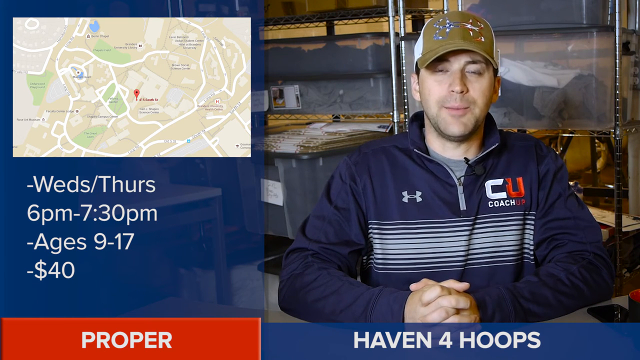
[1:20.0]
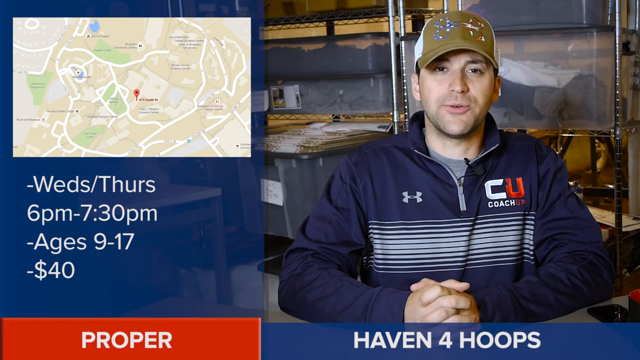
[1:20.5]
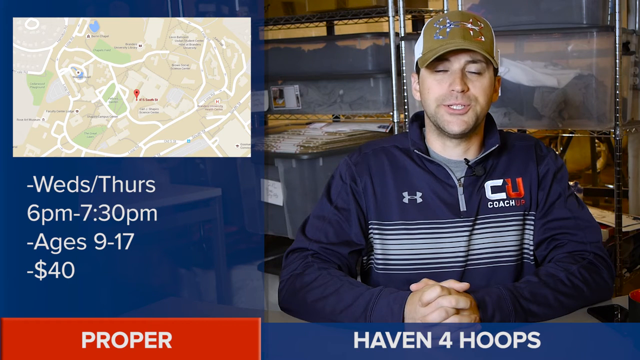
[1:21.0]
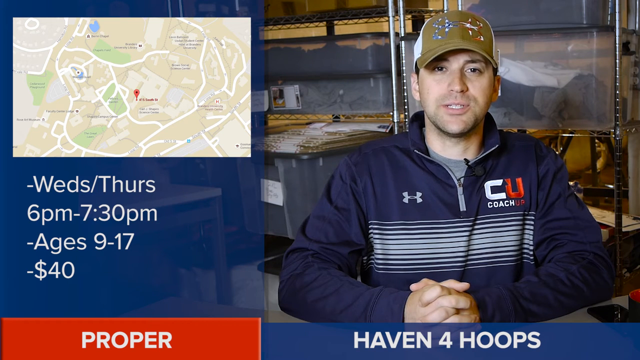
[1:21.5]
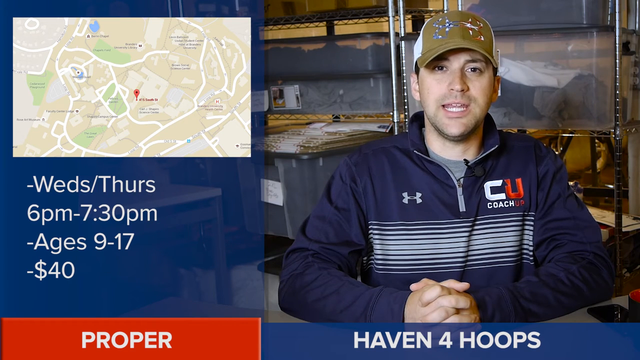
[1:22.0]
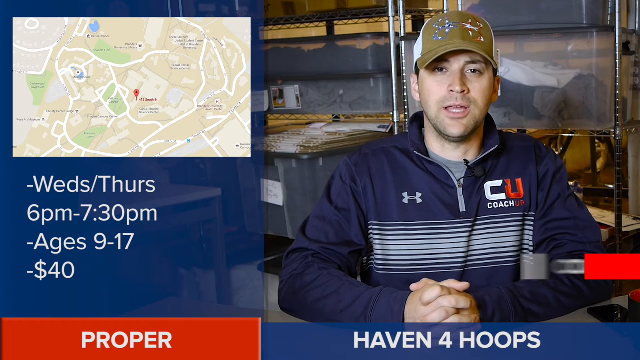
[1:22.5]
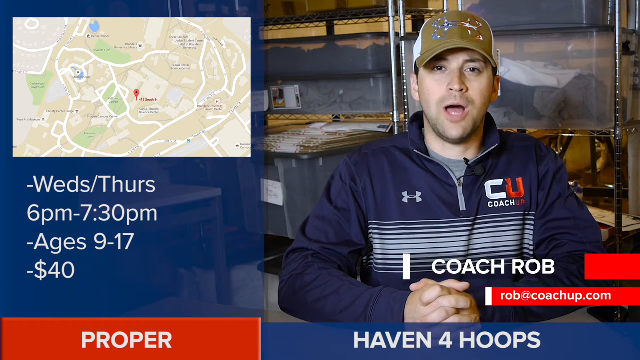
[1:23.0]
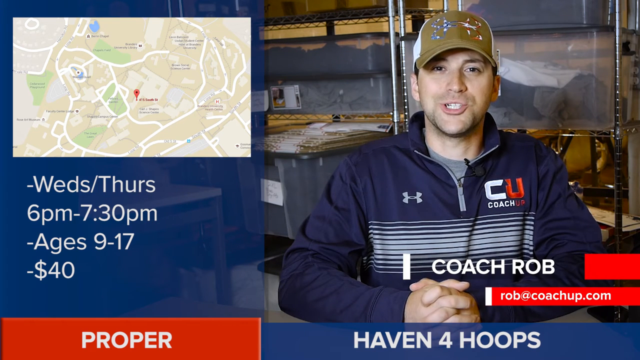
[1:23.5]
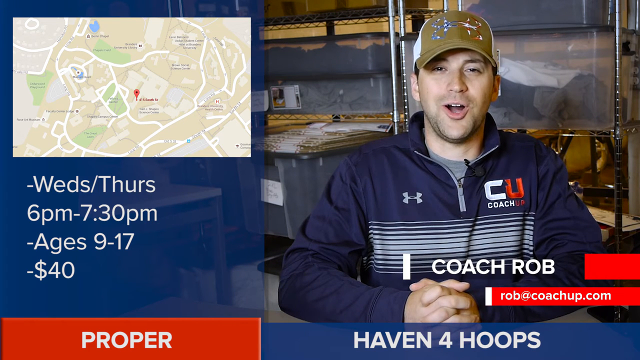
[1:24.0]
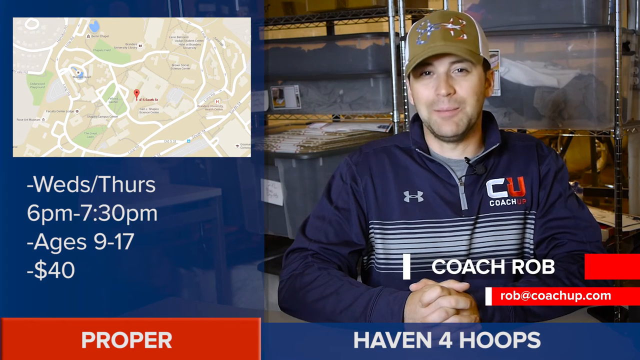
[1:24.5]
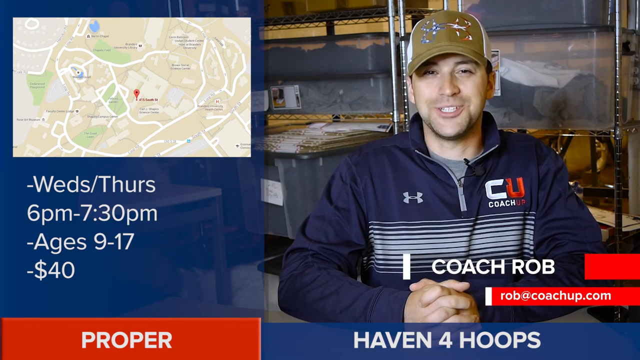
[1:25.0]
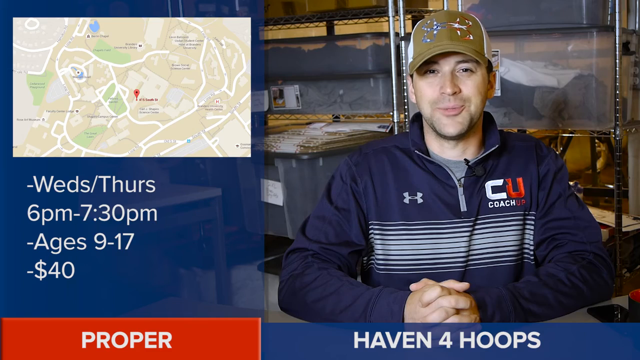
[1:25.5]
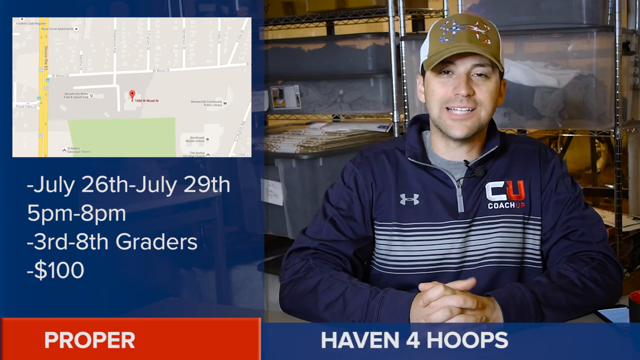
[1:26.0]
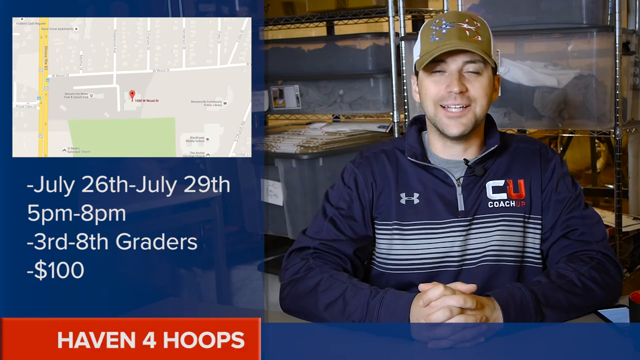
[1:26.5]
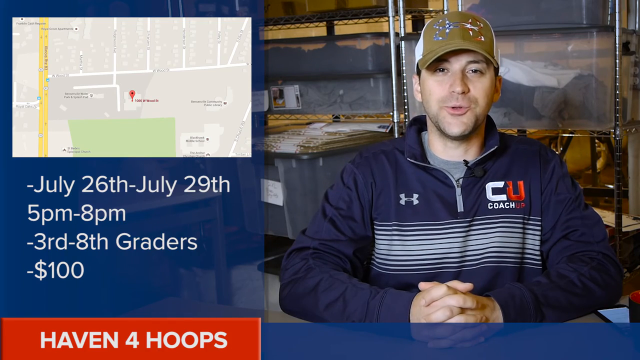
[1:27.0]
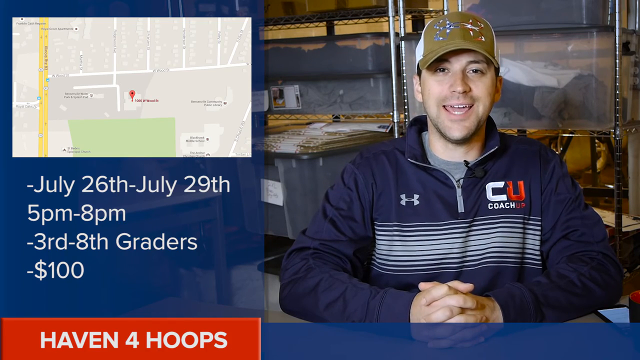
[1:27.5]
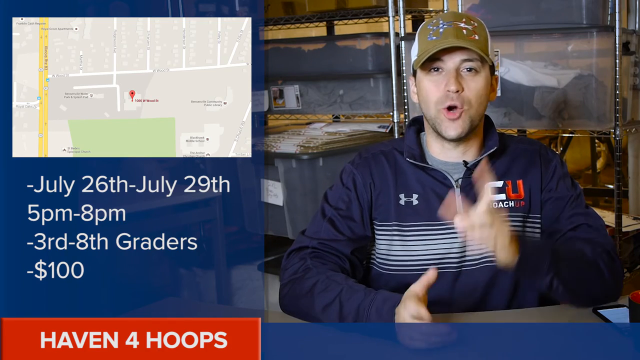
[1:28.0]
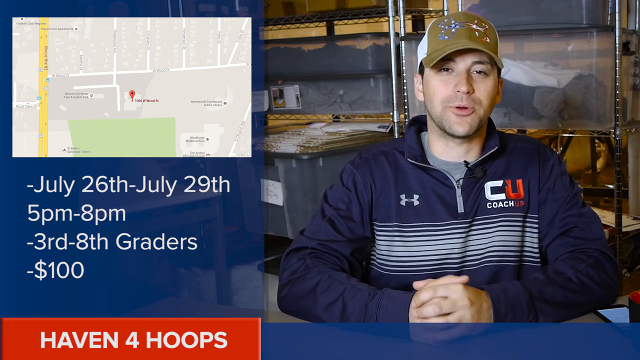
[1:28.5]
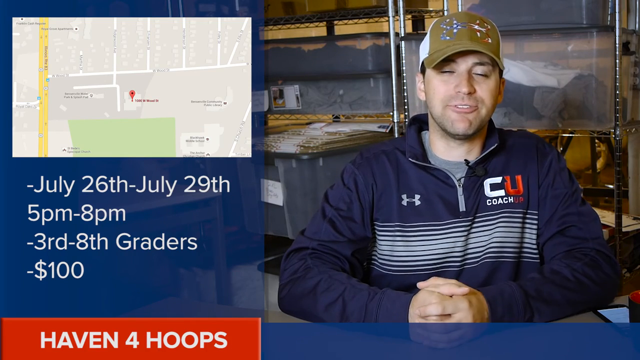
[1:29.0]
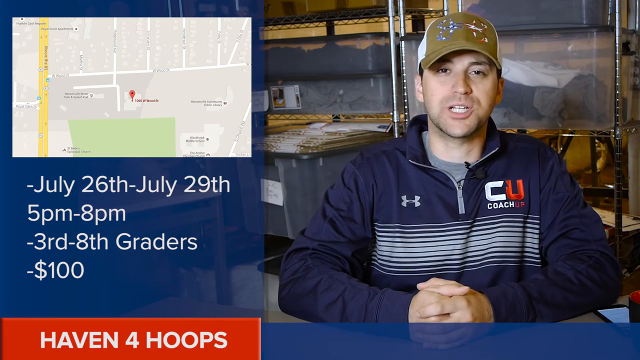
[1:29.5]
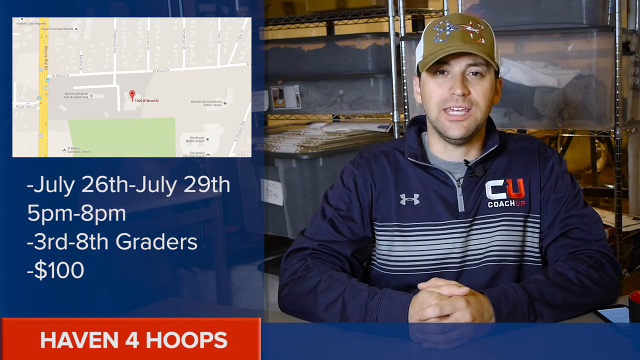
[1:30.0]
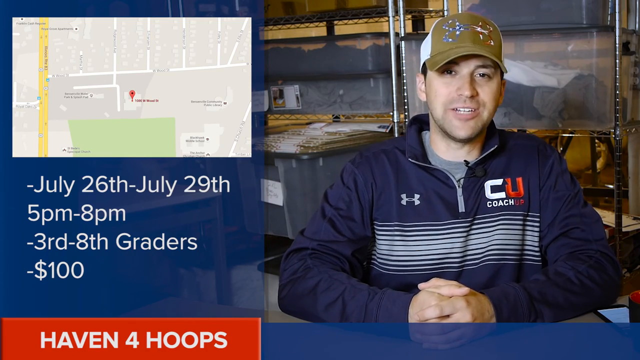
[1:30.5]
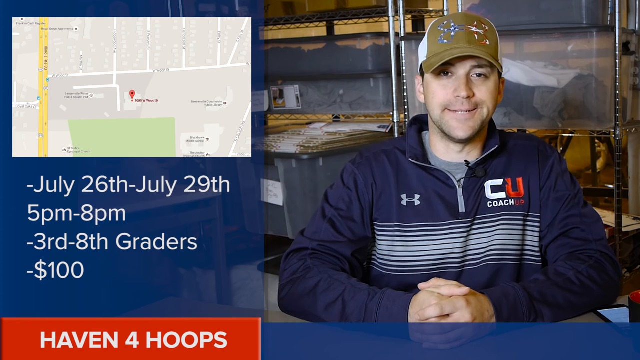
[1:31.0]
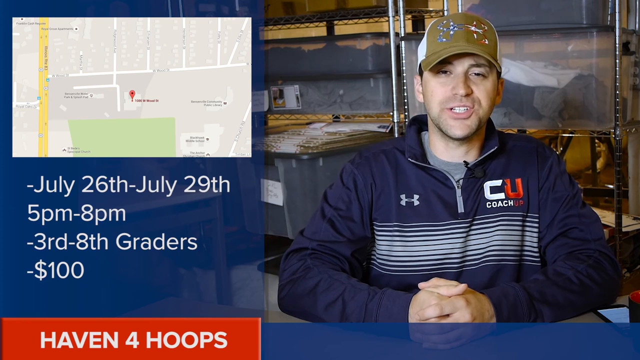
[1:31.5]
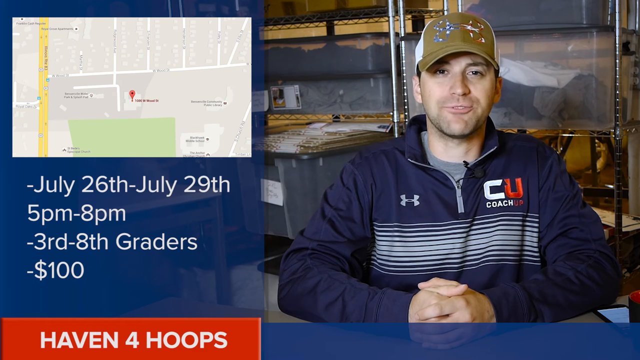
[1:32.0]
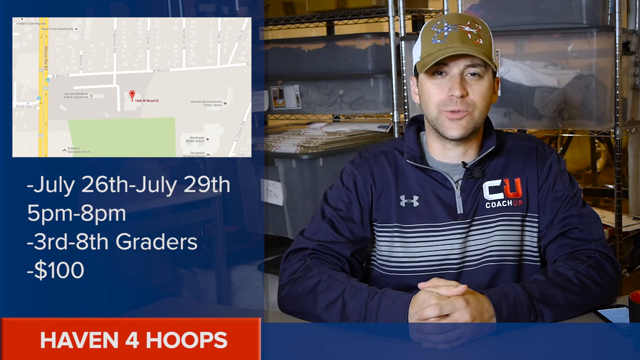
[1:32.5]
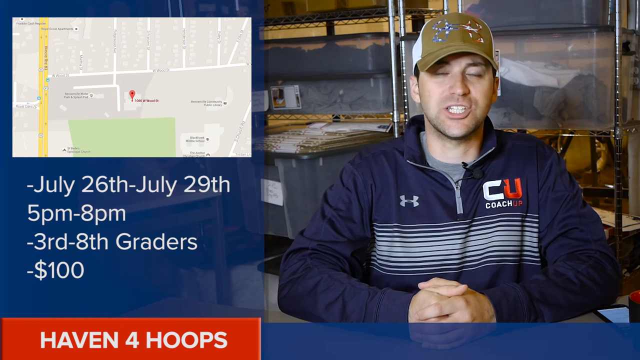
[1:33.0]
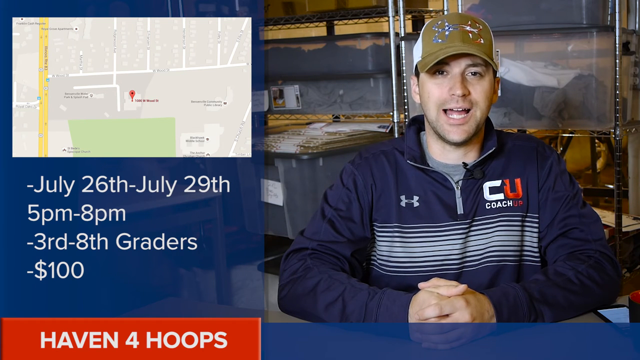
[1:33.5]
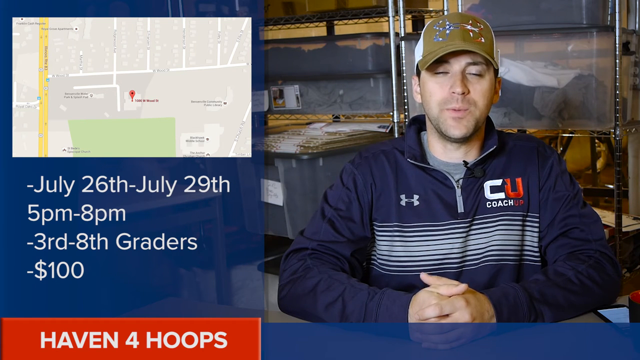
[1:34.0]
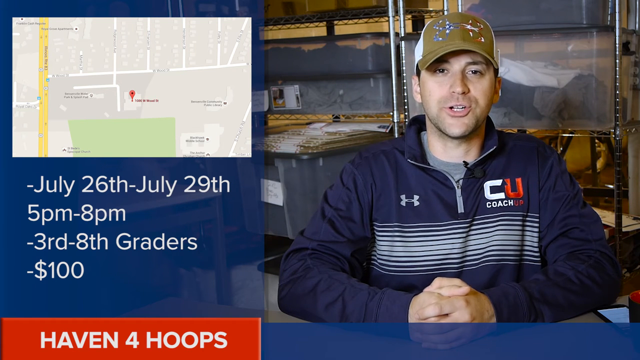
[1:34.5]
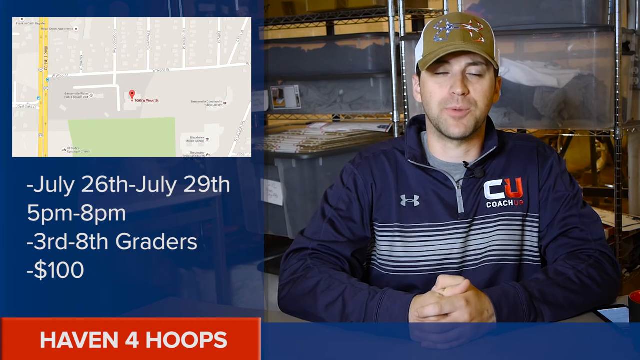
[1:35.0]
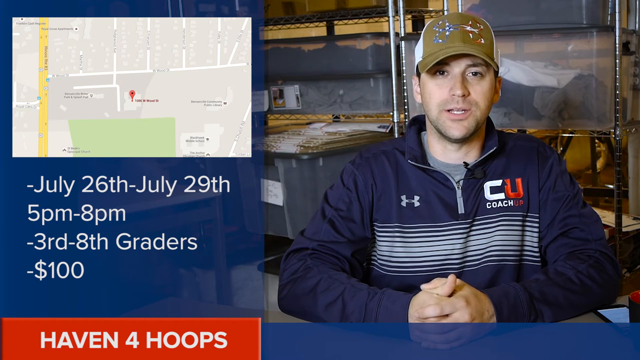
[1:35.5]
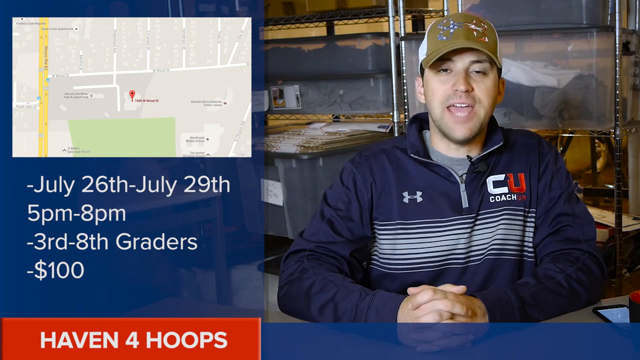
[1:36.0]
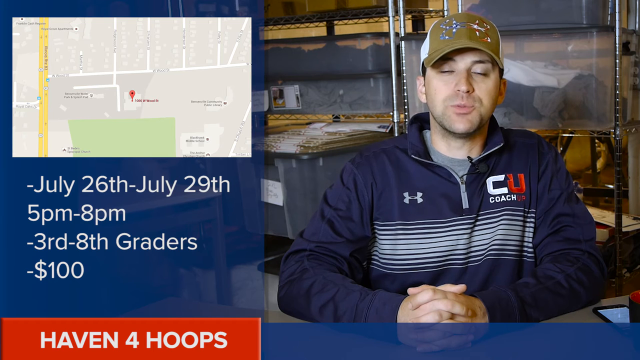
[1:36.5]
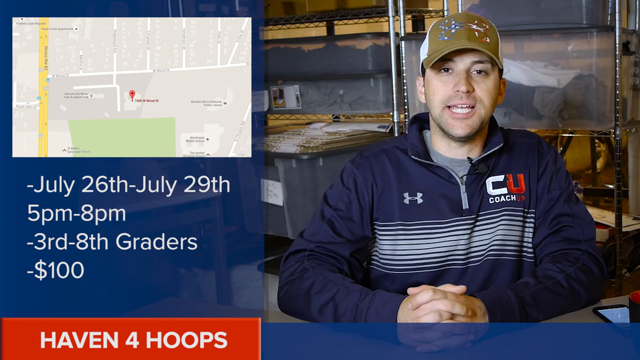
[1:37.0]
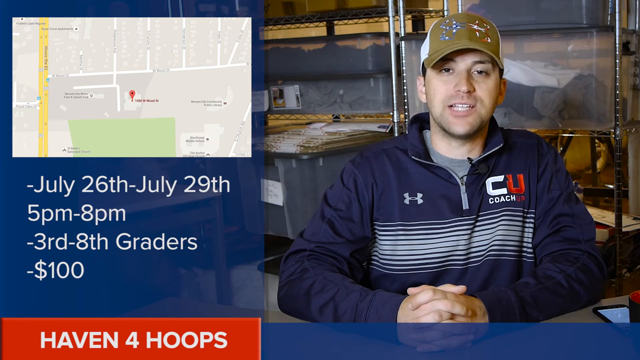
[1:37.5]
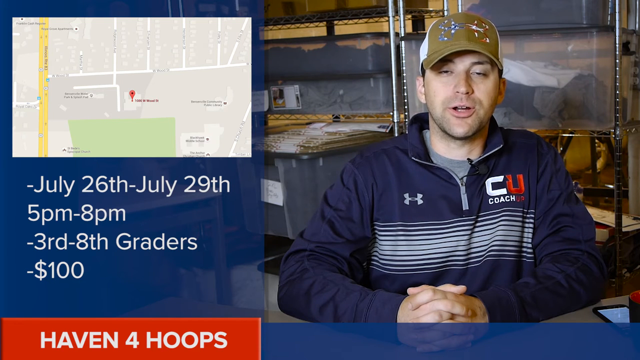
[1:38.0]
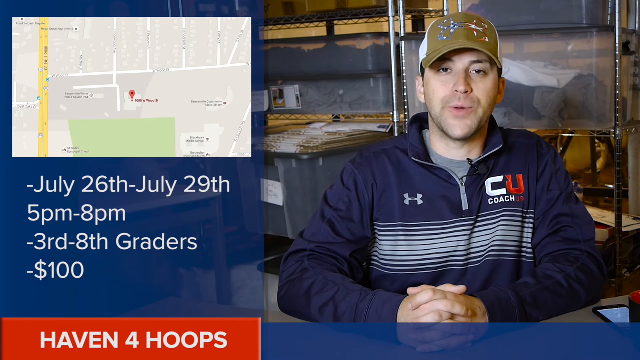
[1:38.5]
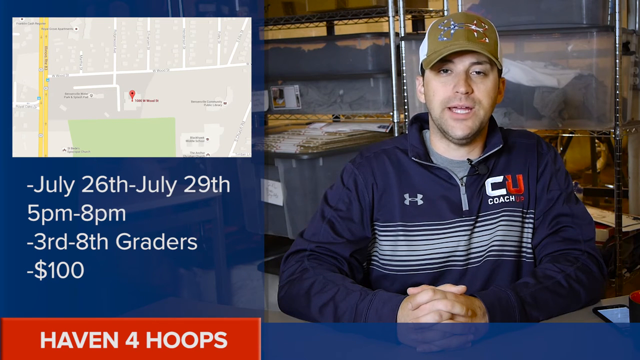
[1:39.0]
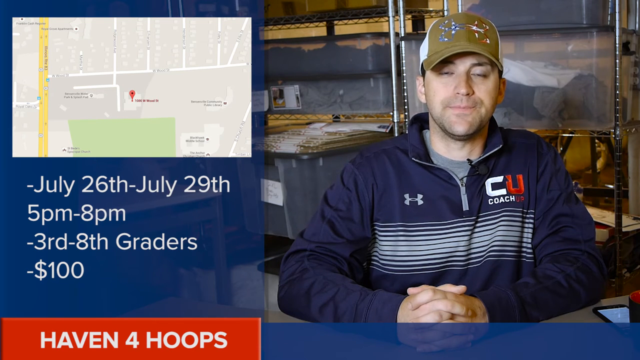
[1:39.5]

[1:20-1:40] A man sits in front of the camera making a video in some type of storage area. Behind him, clear plastic totes filled with what look like garments are stacked on shelving. The front of his shirt has a logo that says "coach." On the left side of the video is a Google map with a red pin in the middle, and below it the text reads "July 26th through July 29th, 5 p.m. to 8 p.m., 3rd through 8th graders" with a cost of $100. He has his hands clasped in front of him.